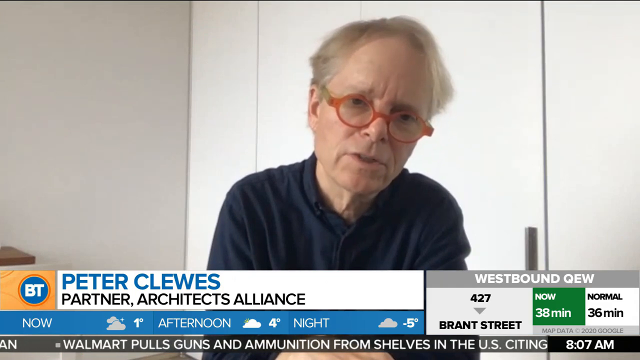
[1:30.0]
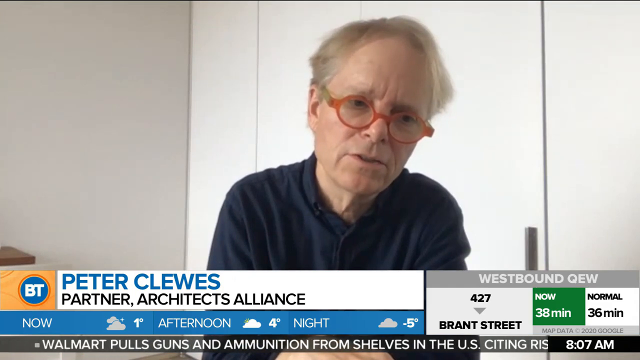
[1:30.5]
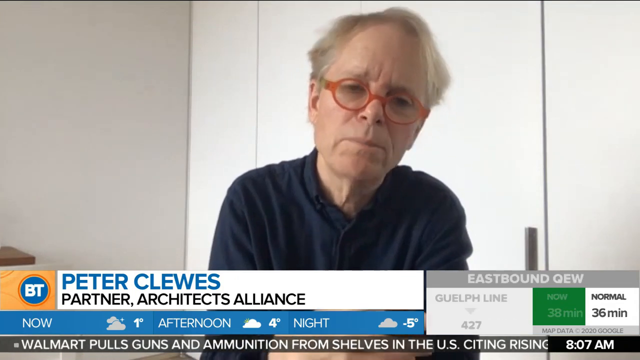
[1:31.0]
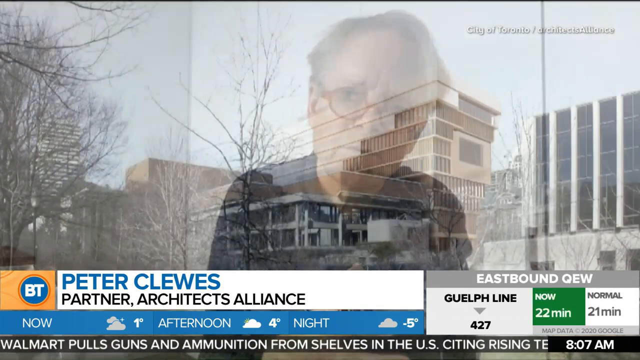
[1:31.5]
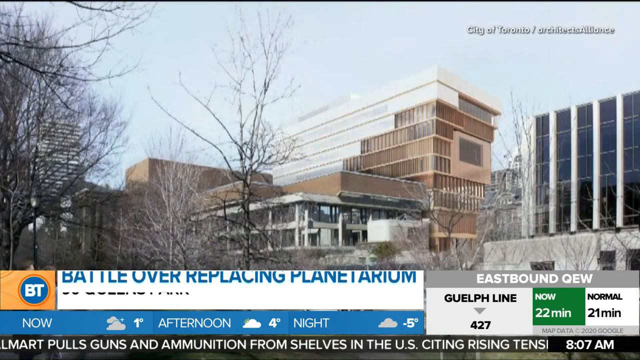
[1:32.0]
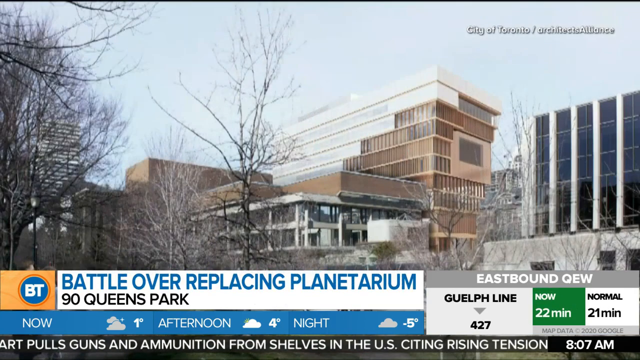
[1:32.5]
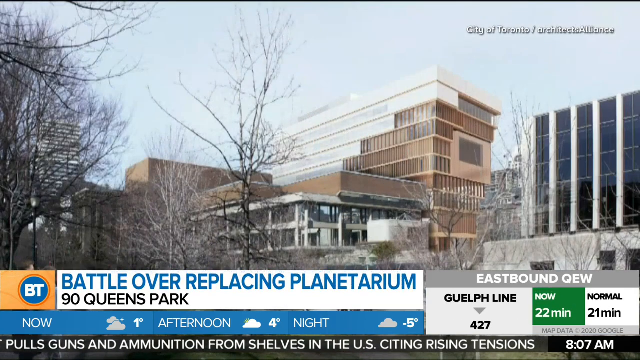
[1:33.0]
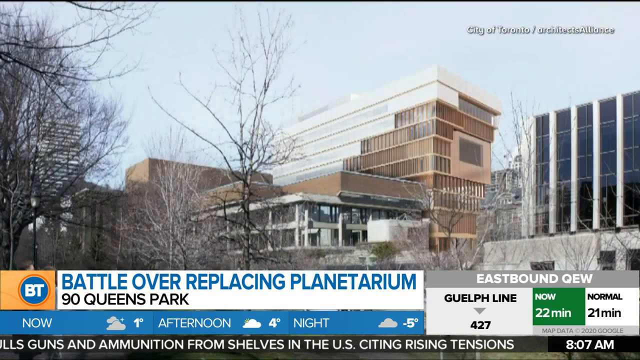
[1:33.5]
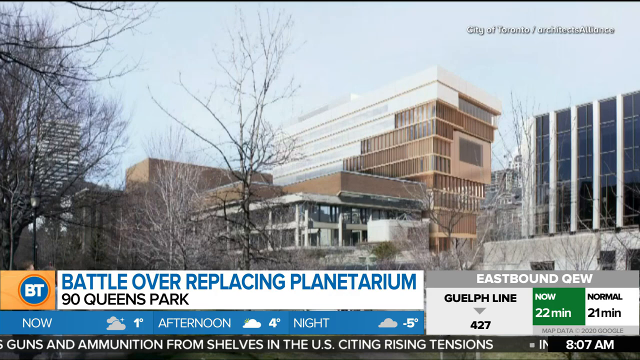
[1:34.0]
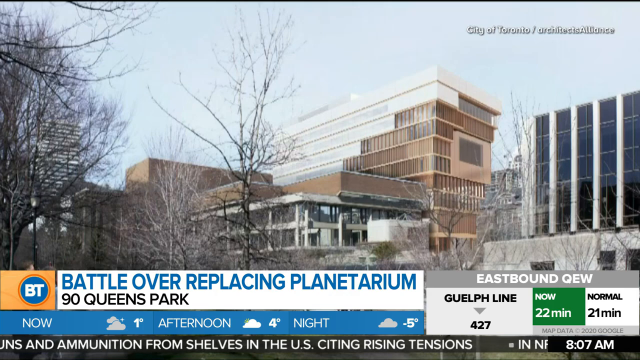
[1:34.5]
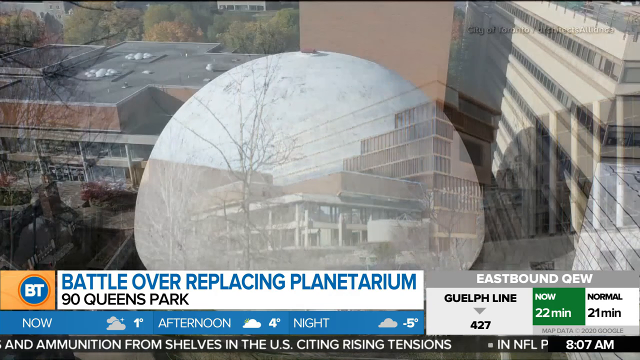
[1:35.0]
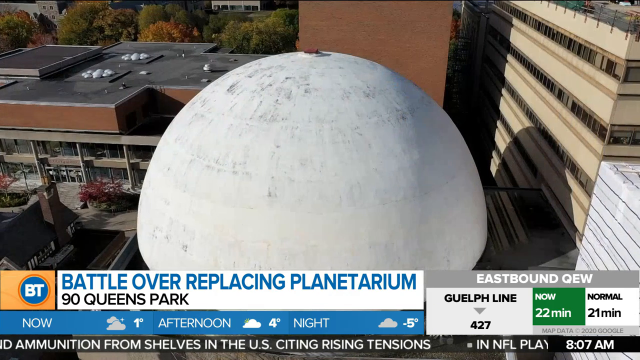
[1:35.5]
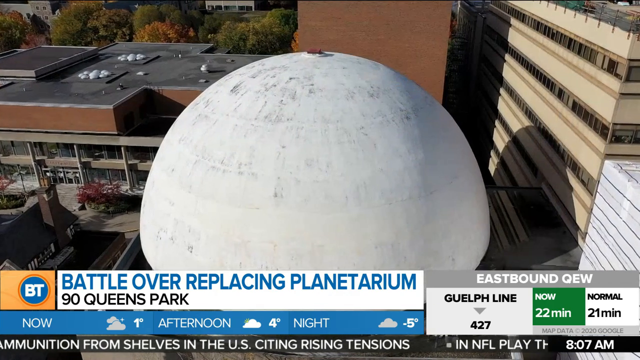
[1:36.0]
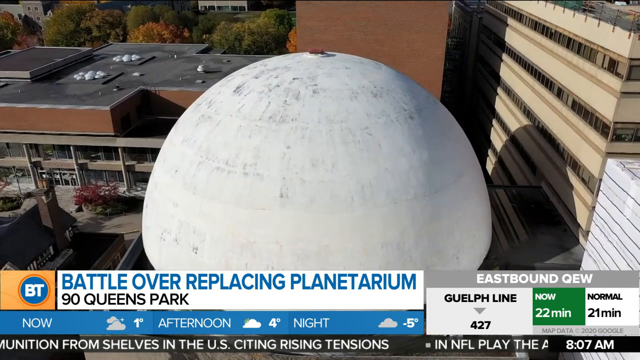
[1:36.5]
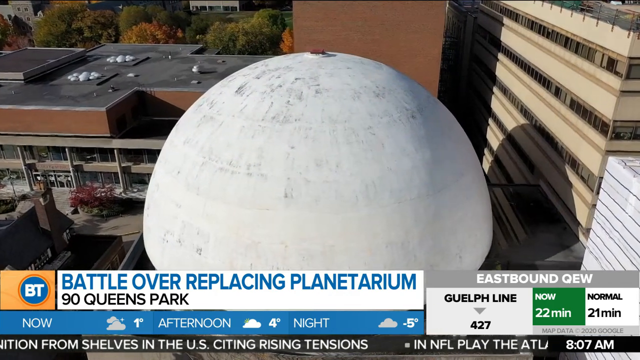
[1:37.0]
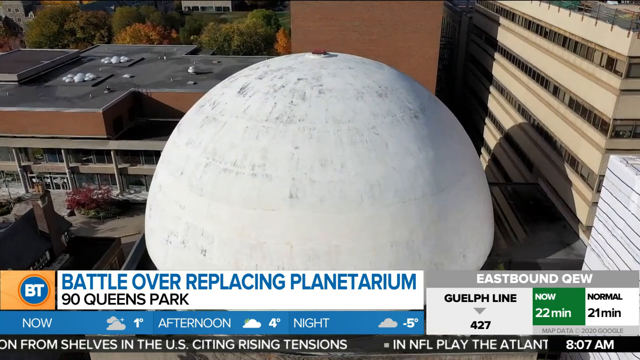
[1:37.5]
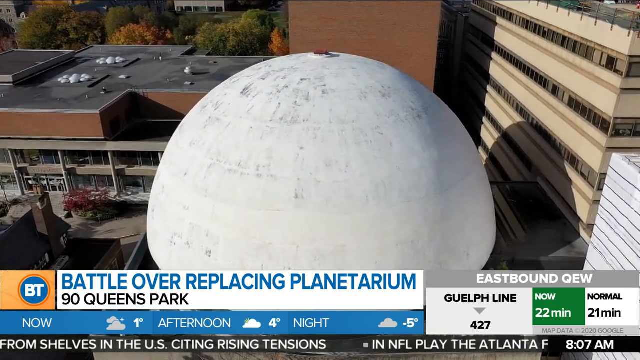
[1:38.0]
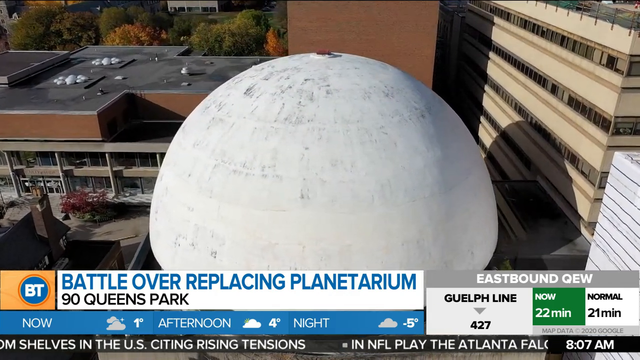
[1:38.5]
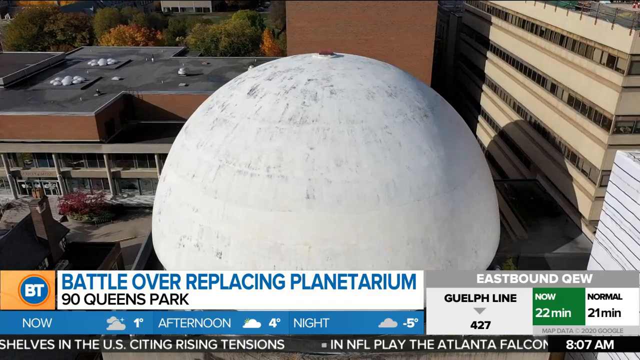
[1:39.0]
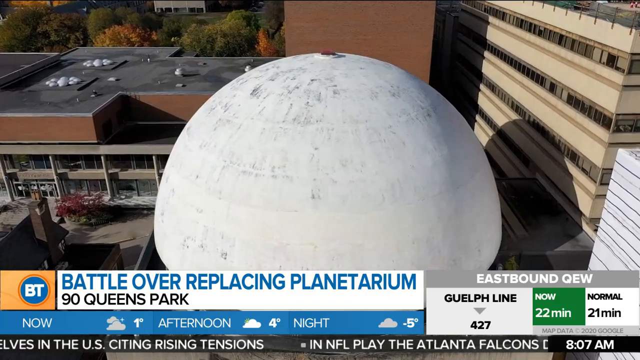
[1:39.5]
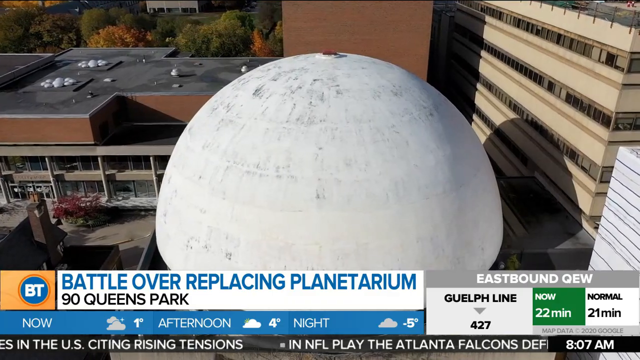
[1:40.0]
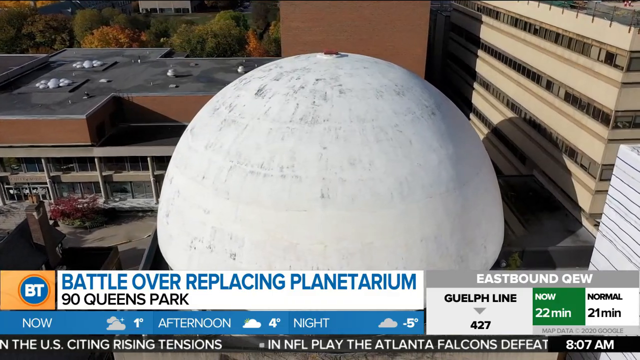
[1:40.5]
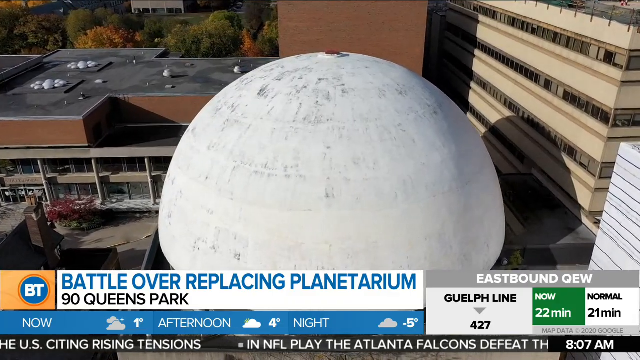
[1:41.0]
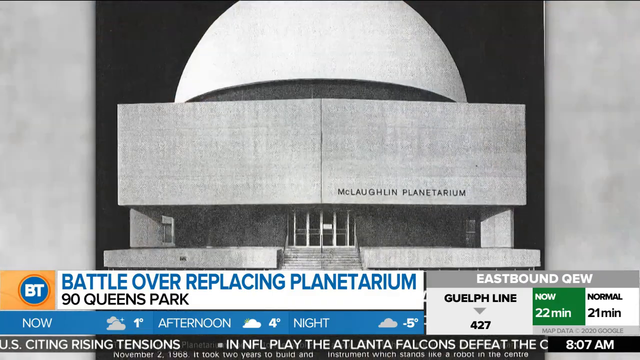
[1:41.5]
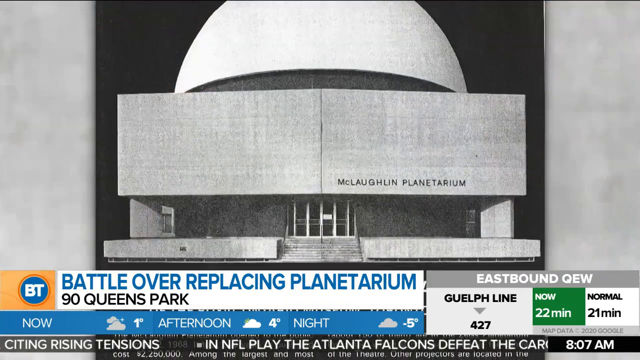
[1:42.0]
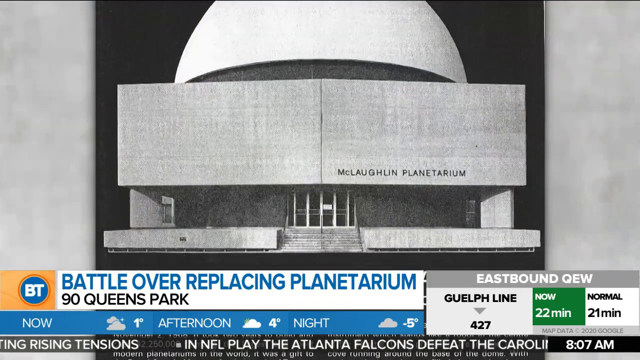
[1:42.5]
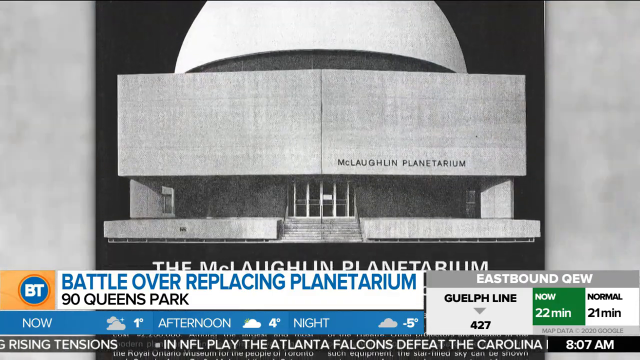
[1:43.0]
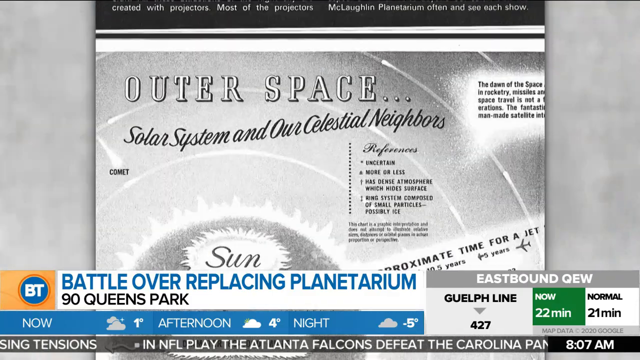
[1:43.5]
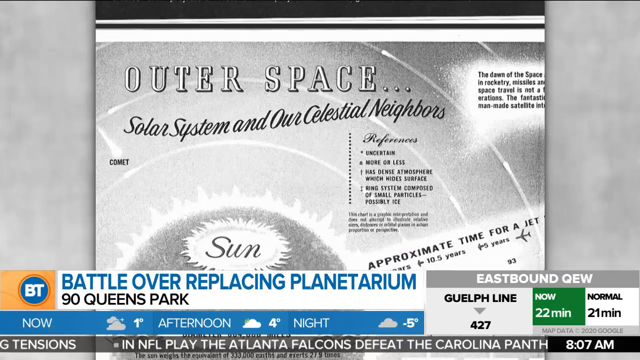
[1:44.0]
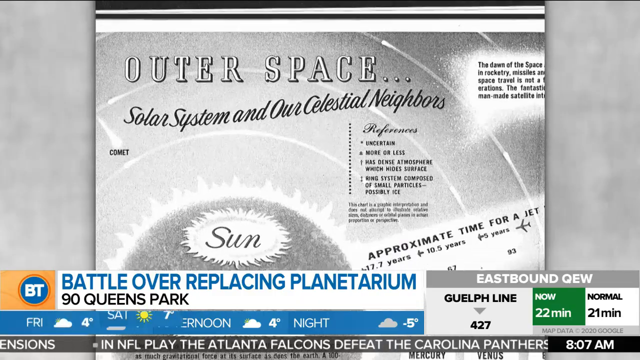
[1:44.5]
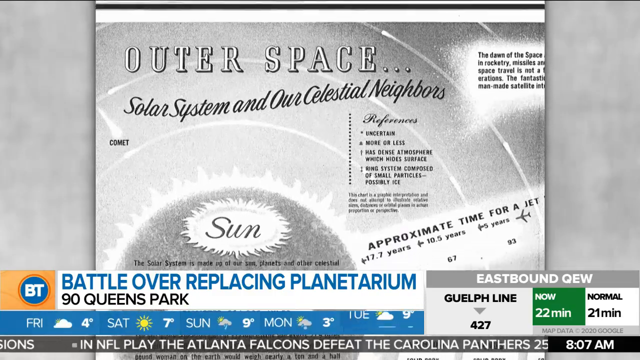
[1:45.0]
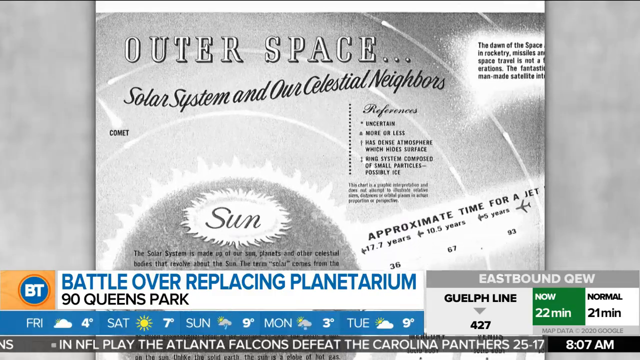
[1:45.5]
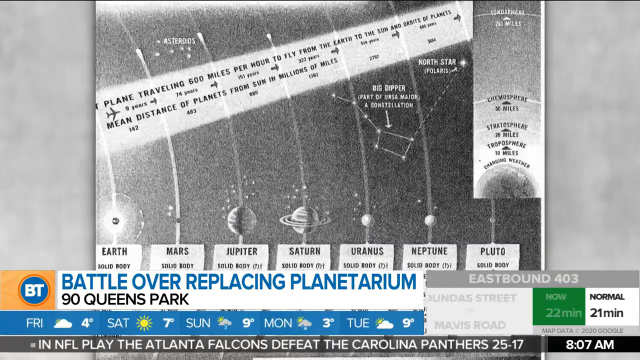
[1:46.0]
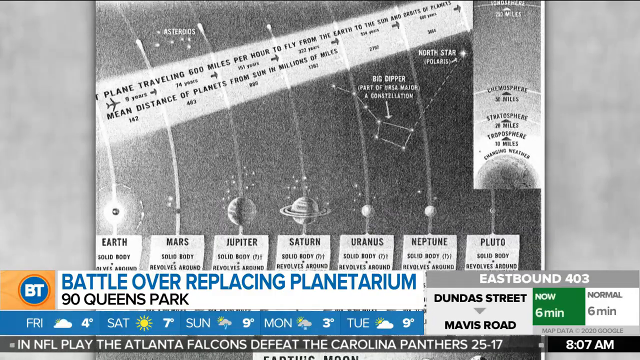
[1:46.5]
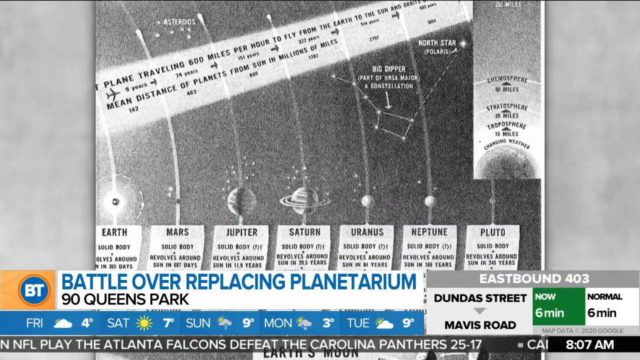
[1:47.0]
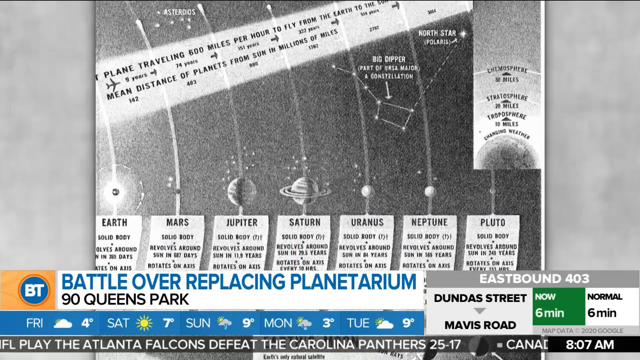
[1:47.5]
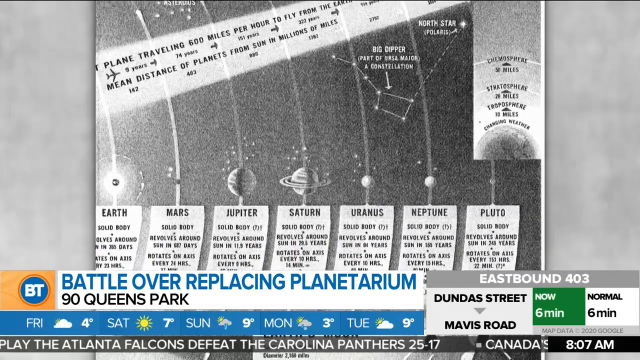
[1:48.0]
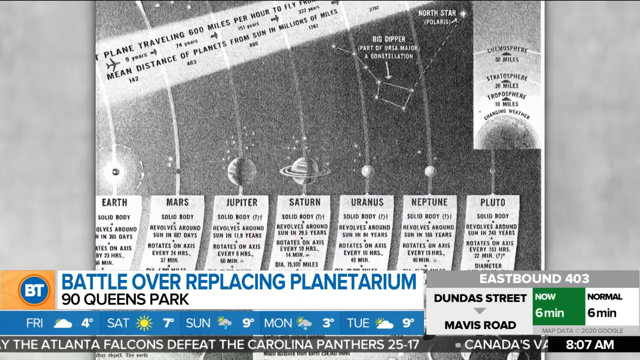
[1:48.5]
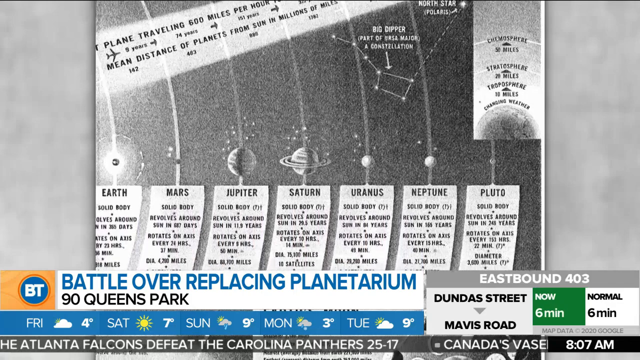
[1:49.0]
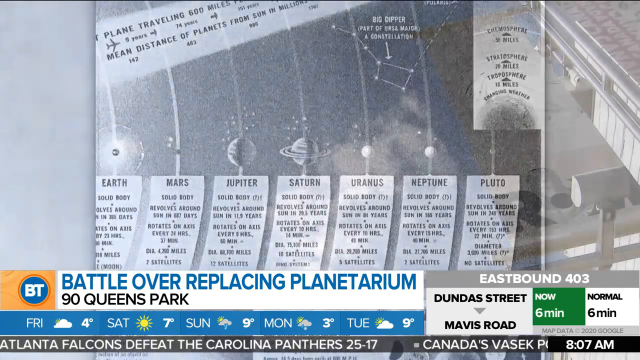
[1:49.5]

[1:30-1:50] The male analyst, an architect named Peter Cluess, gives a brief explanation on screen. Pictures of the building are shown, along with pictures of outer space, the sun and different planets, and the planets are shown on paper. The building is shown in aerial view, with the surroundings and nearby buildings visible. The headlines change over and over.